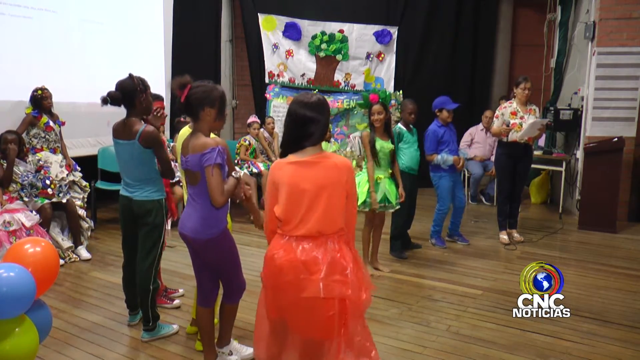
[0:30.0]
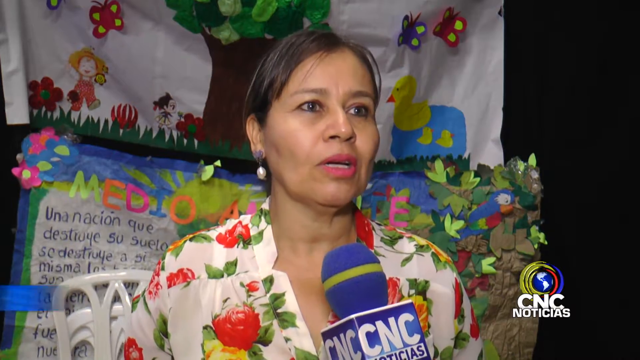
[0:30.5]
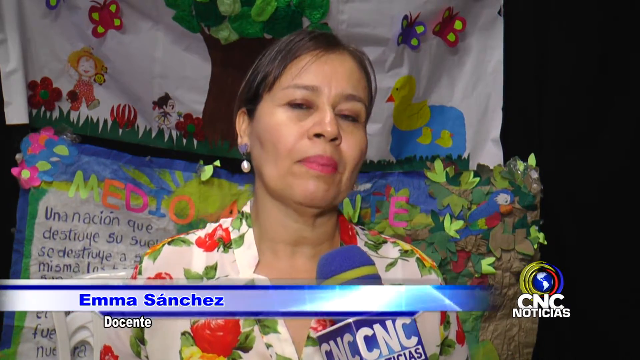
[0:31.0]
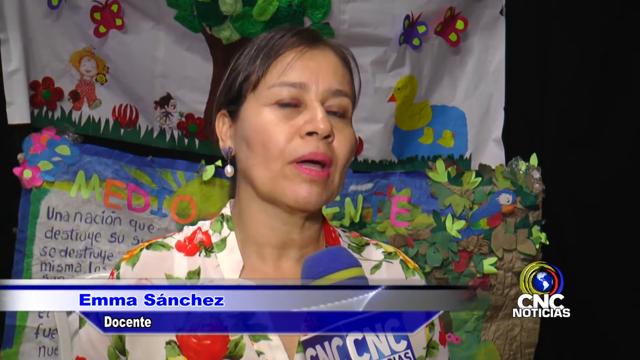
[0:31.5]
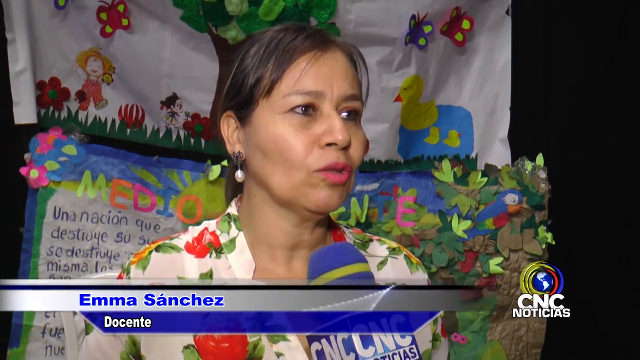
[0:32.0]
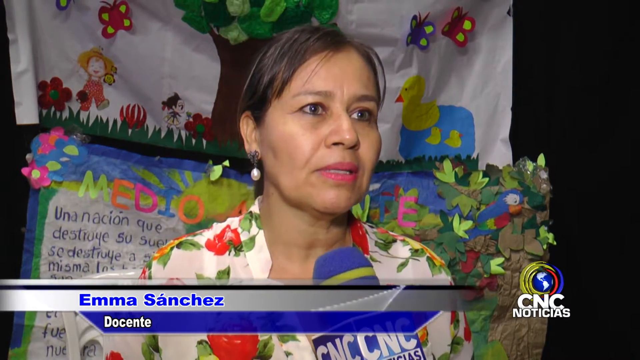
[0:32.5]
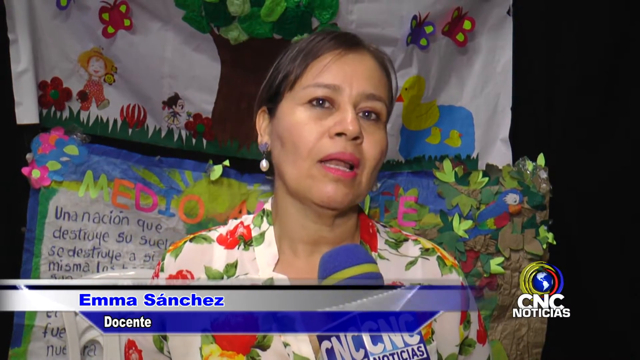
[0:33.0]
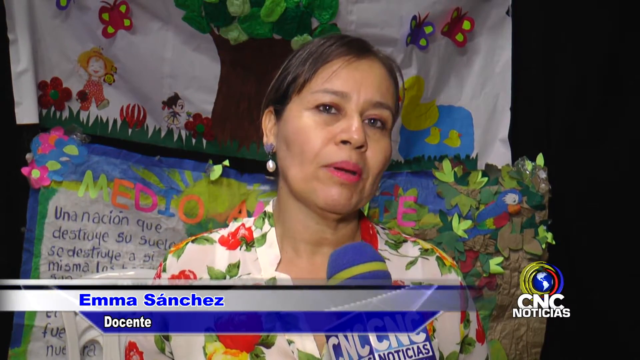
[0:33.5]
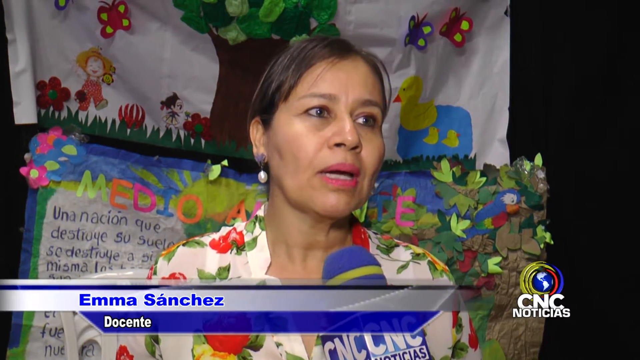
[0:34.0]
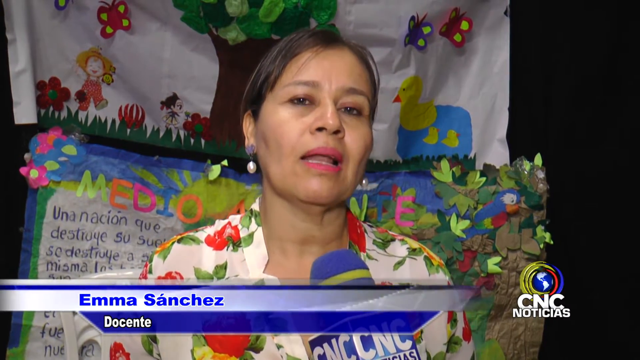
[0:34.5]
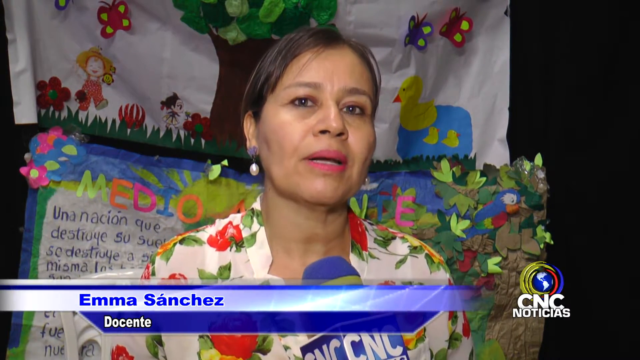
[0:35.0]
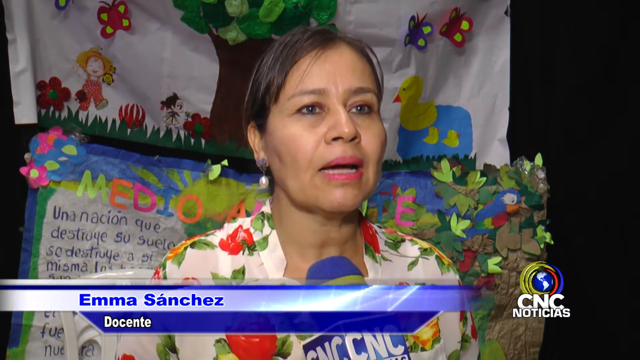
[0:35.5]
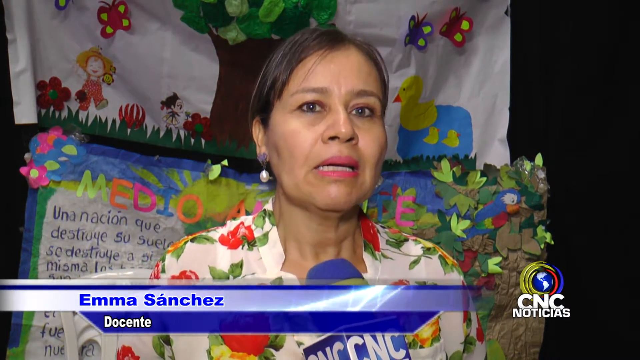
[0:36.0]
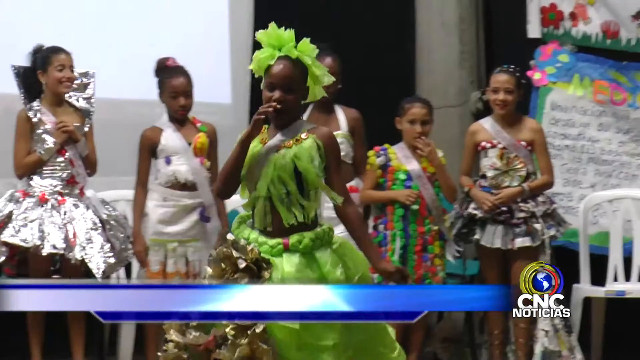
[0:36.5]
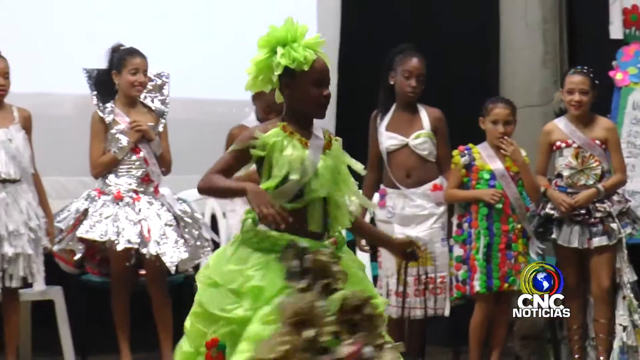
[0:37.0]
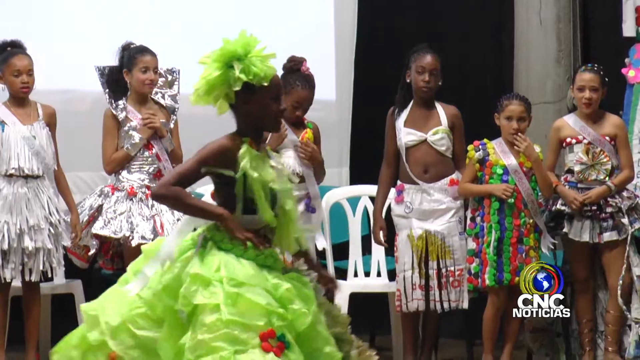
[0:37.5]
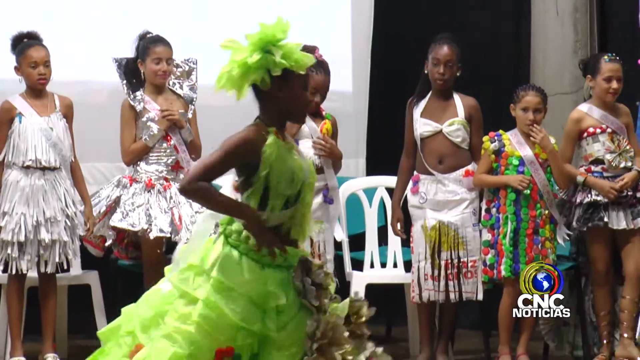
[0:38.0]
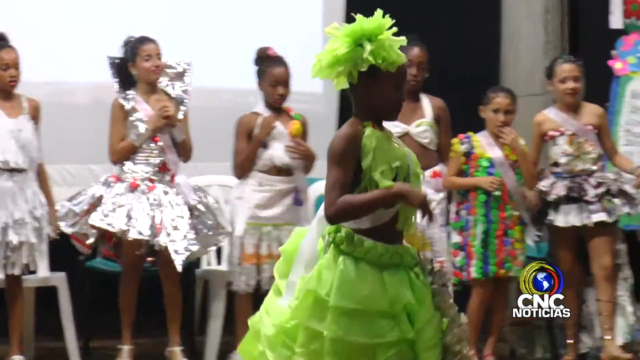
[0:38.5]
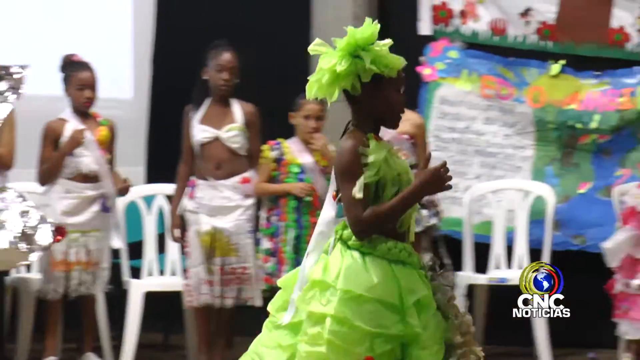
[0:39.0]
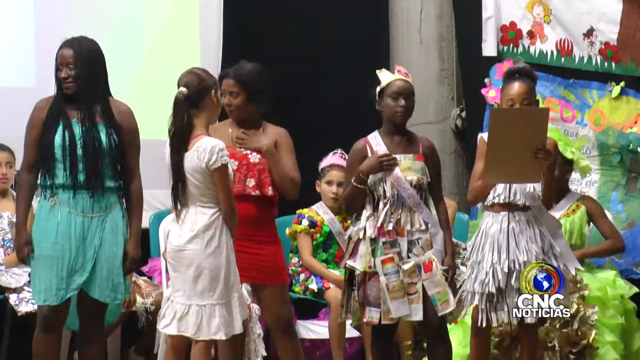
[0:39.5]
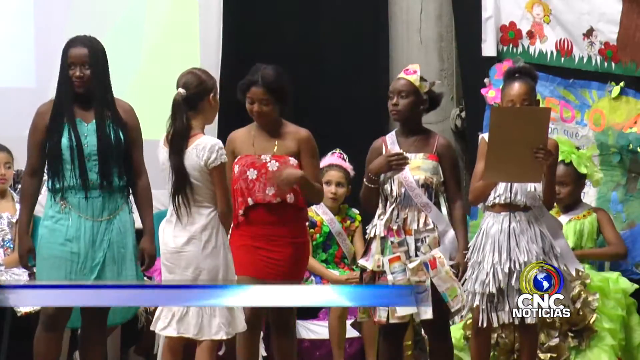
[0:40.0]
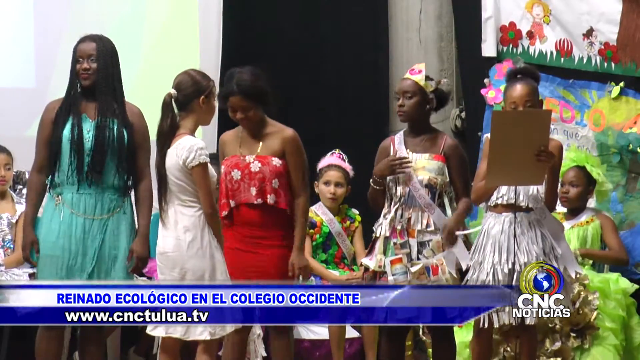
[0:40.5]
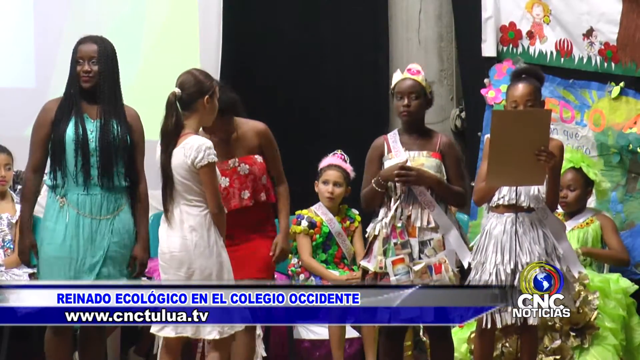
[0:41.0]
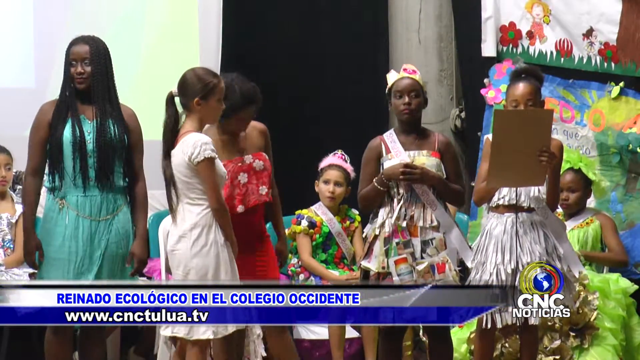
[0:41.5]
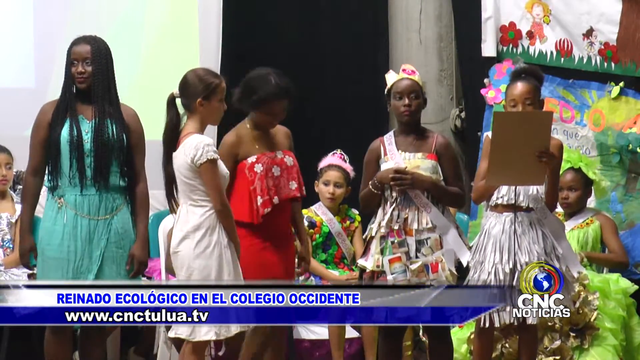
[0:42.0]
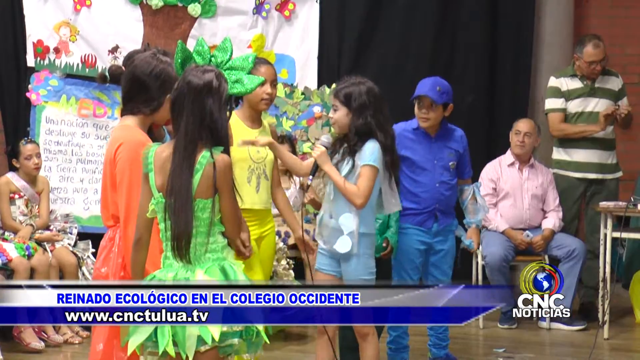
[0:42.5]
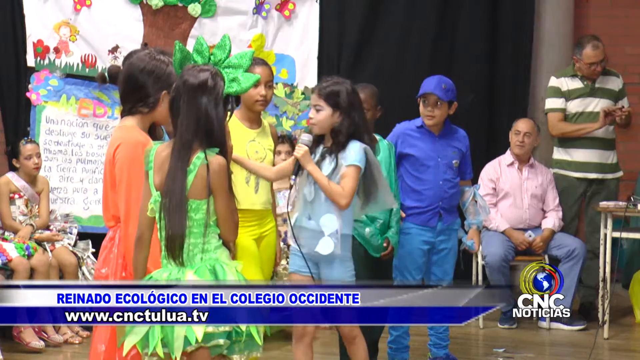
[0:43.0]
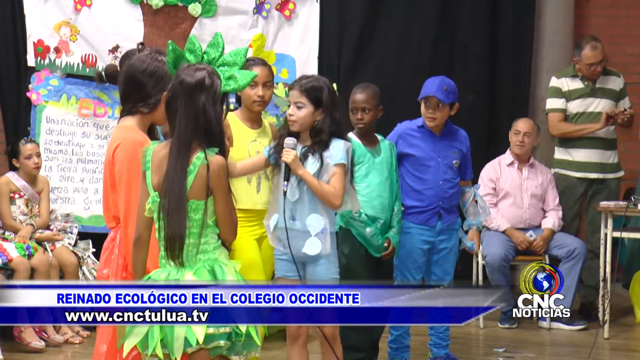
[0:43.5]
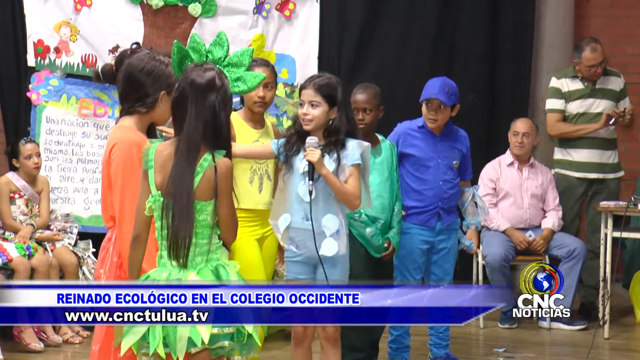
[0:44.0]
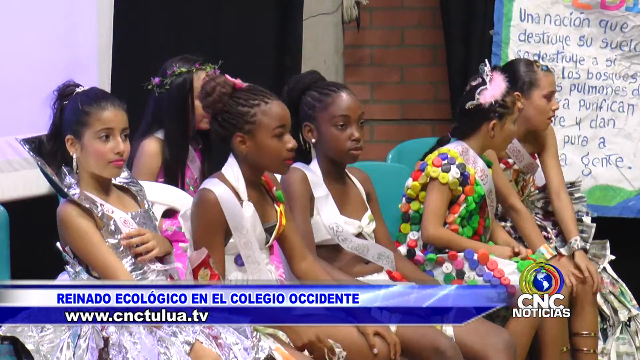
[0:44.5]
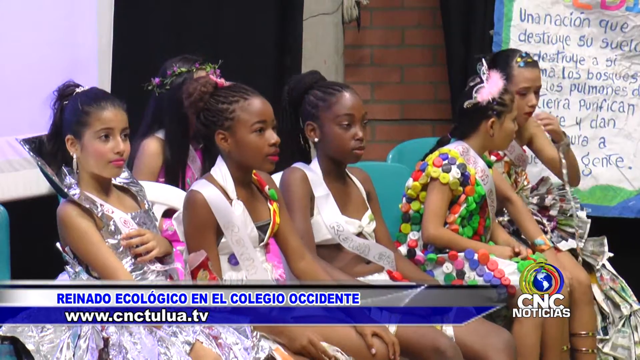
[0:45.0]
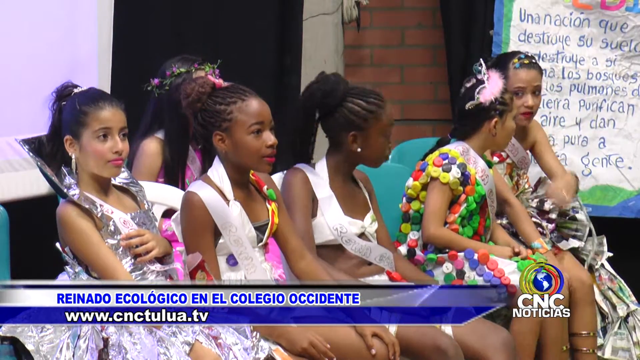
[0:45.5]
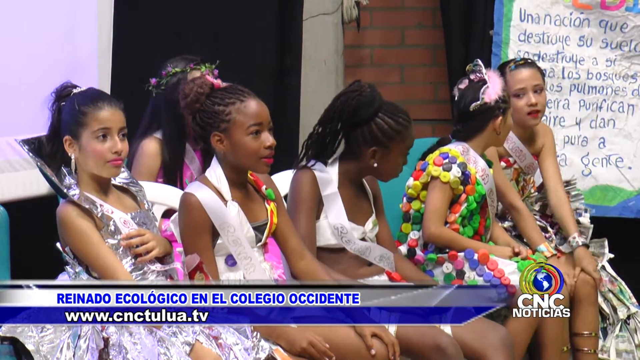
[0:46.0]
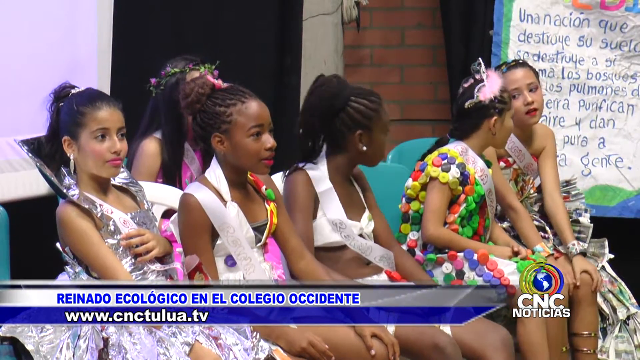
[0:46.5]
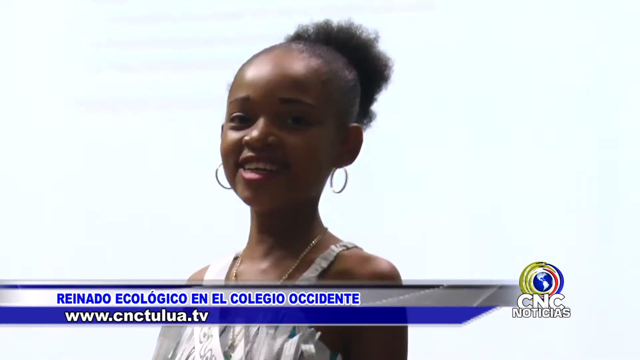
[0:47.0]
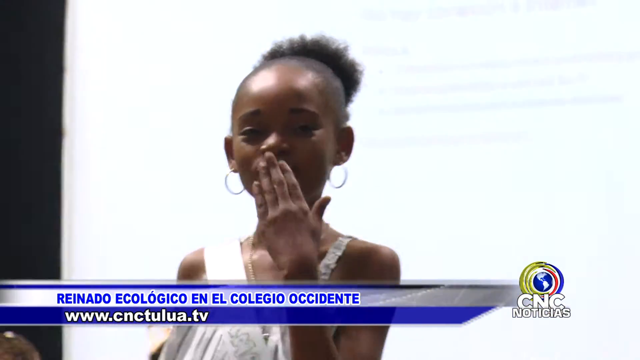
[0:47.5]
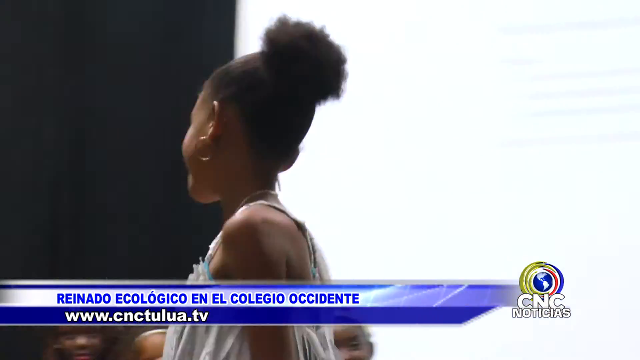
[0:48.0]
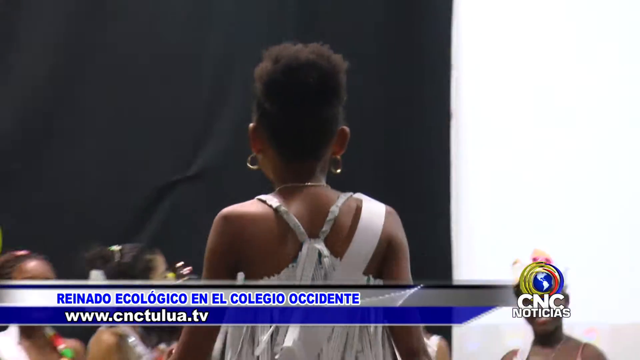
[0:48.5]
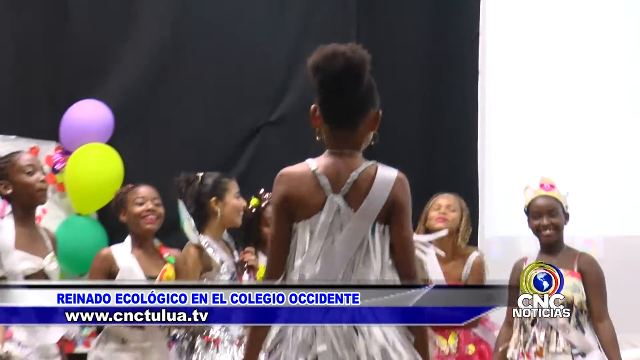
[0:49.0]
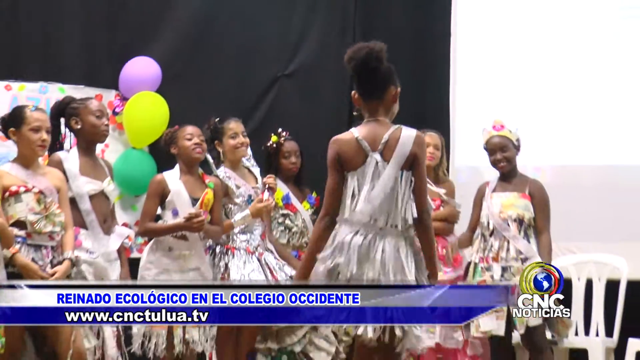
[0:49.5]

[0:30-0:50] The CNC Noticias broadcast, with the title "las noticias que usted quiere ver lunes a viernes", shows what appears to be a school auditorium with a very social, community atmosphere. On the stage are students who are pretty much all African American girls, dressed up for what appears to be a pageant that is also almost like a Spanish play, with something to do with ecology, looking out for animals and trees. The event looks festive. There are some white people present, but the students on stage are mainly African American girls dressed in a sort of Mardi Gras-like fashion.